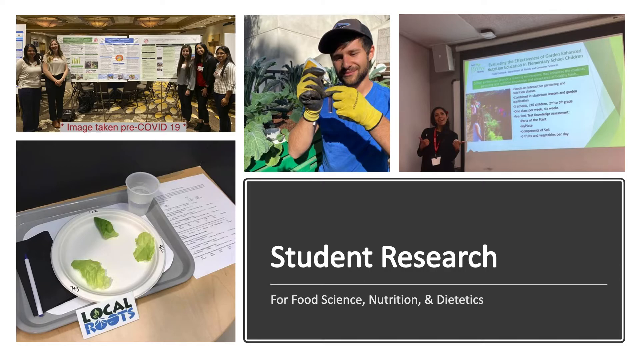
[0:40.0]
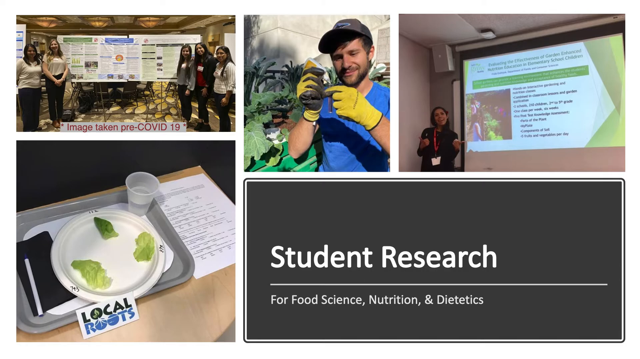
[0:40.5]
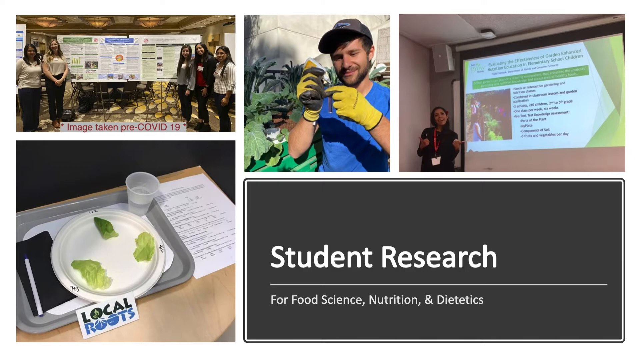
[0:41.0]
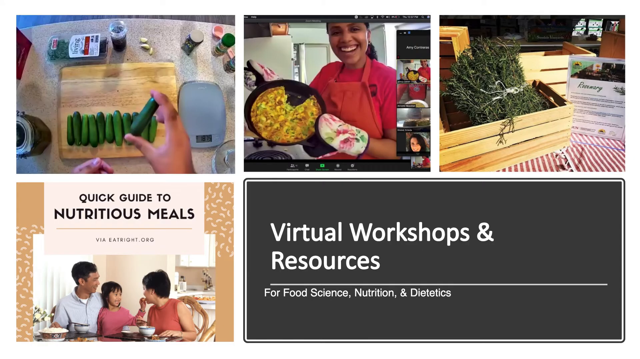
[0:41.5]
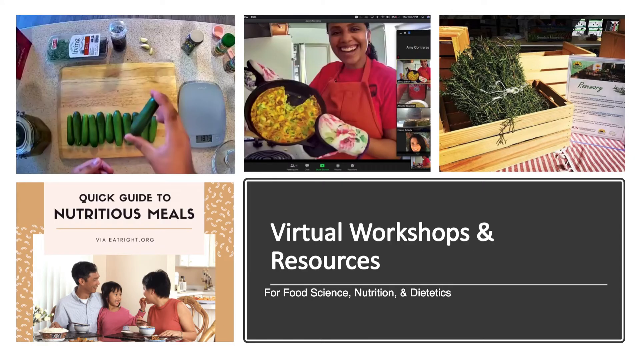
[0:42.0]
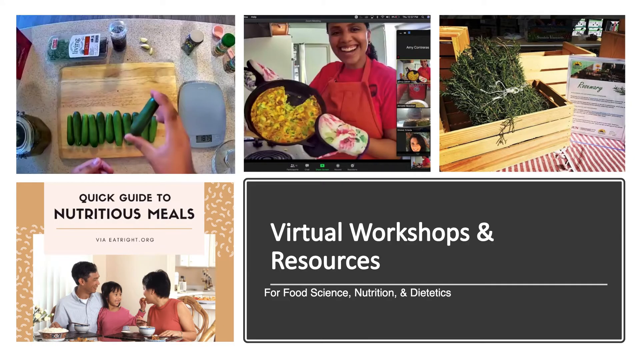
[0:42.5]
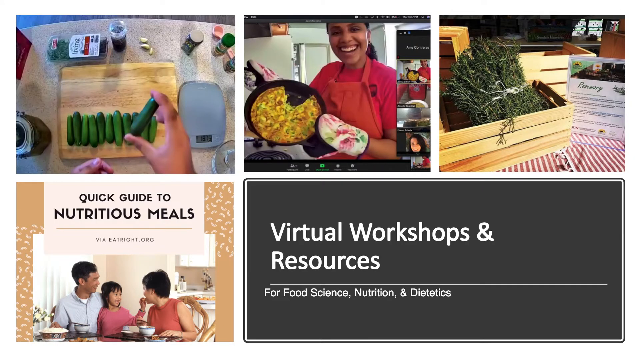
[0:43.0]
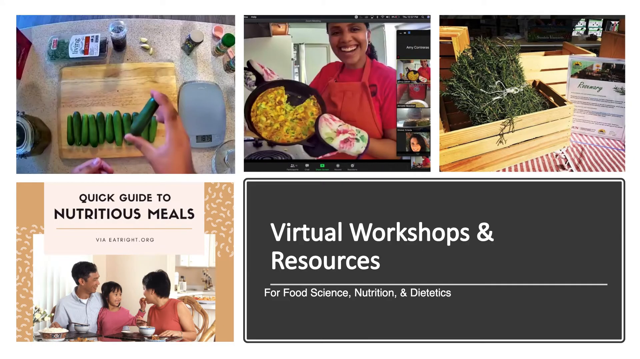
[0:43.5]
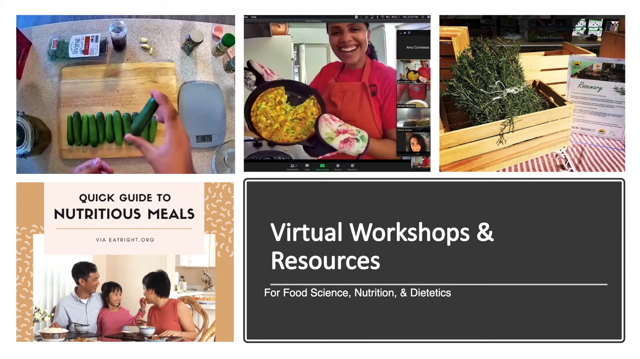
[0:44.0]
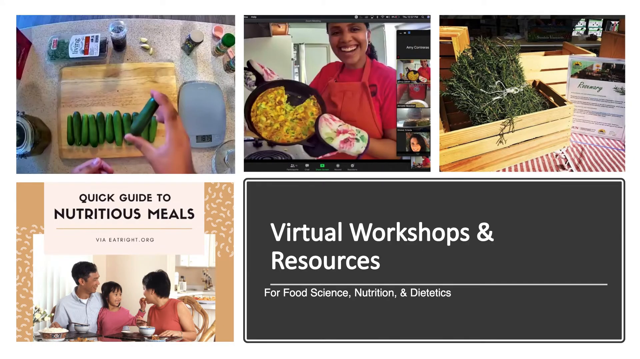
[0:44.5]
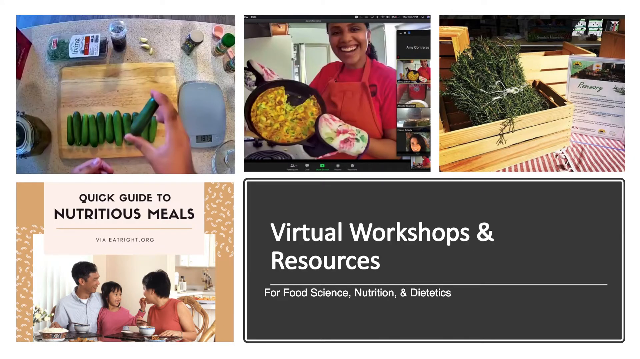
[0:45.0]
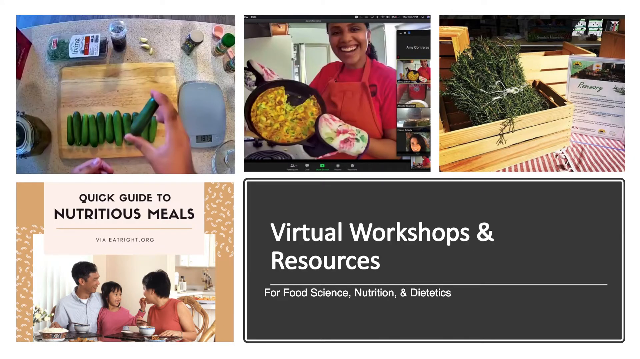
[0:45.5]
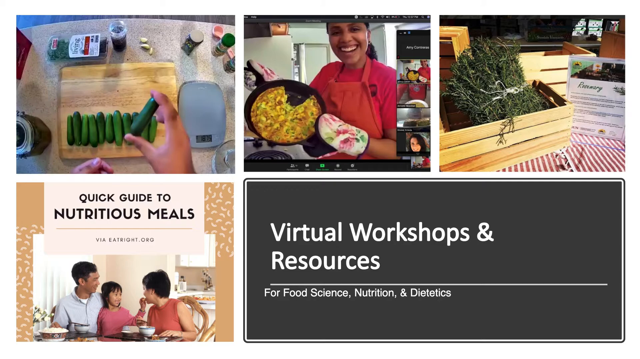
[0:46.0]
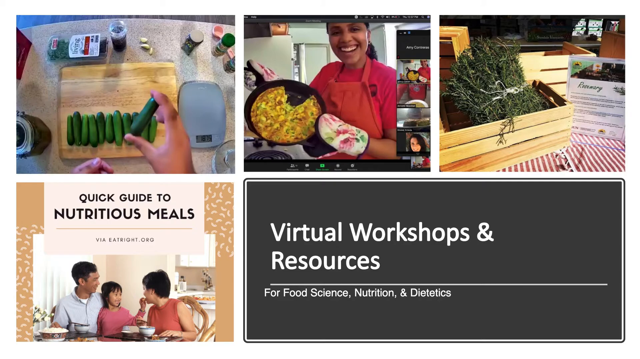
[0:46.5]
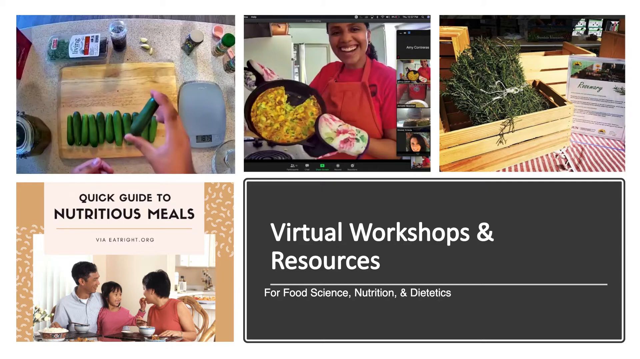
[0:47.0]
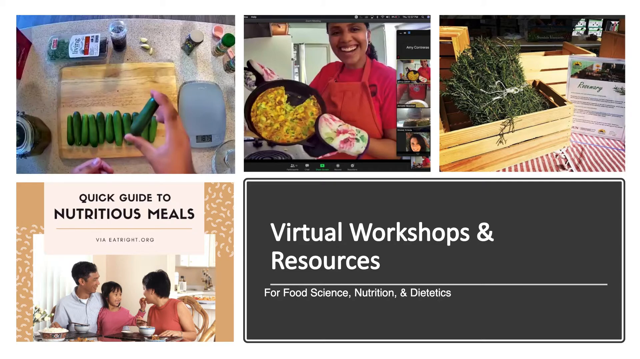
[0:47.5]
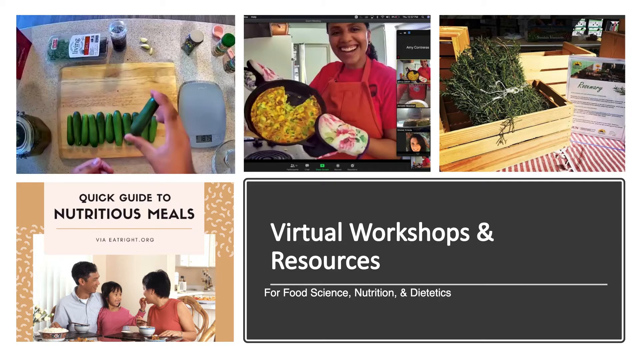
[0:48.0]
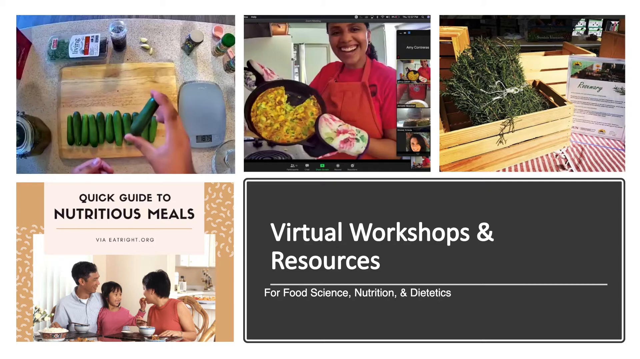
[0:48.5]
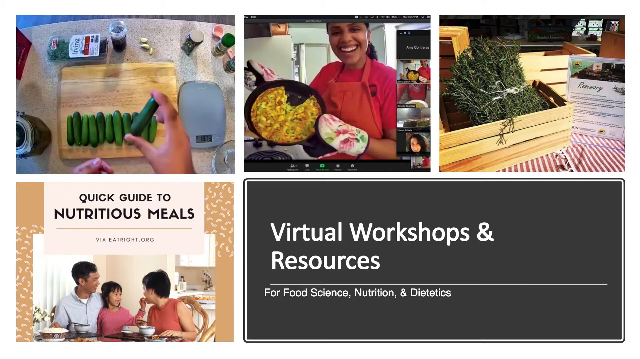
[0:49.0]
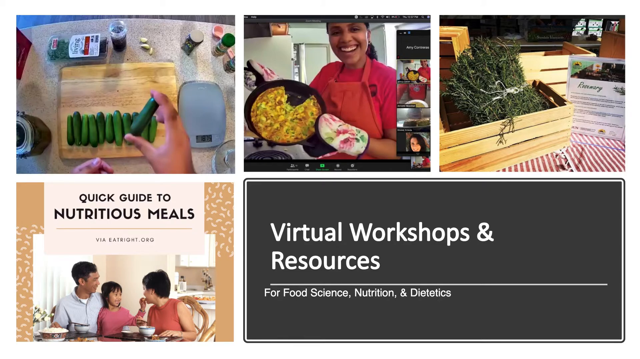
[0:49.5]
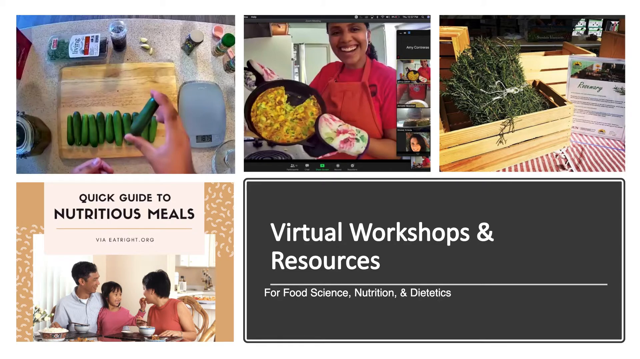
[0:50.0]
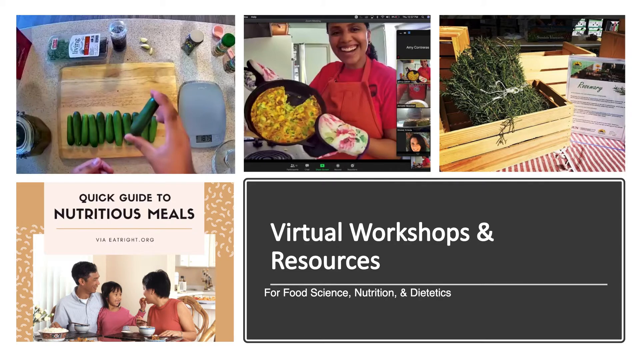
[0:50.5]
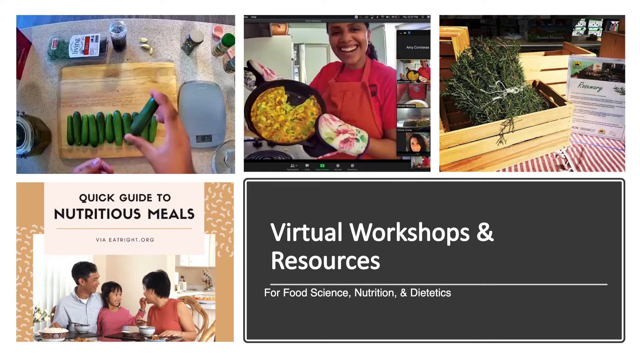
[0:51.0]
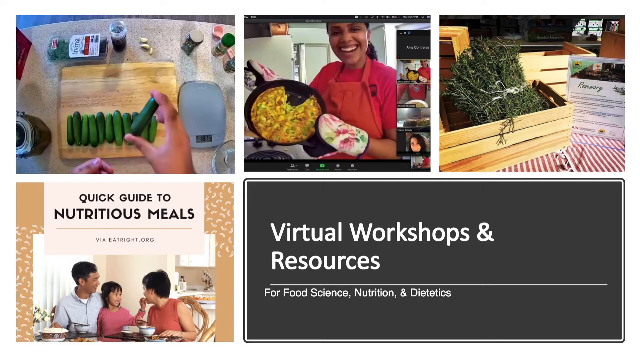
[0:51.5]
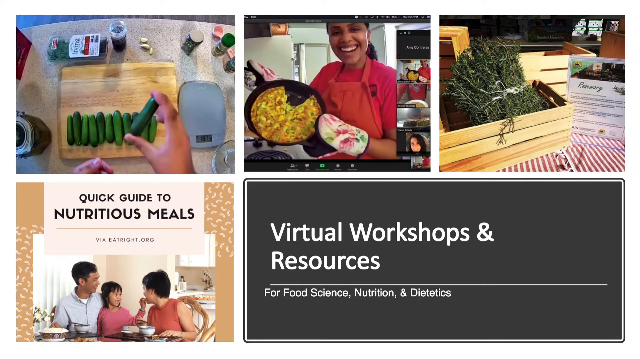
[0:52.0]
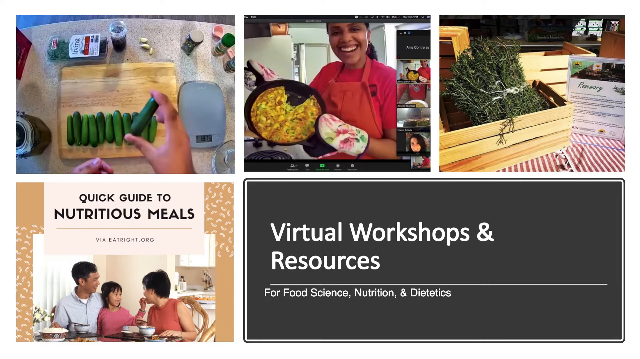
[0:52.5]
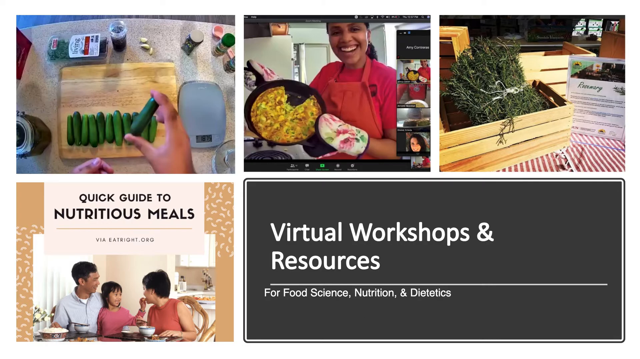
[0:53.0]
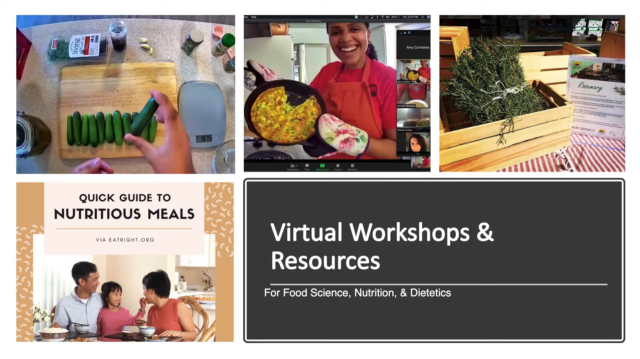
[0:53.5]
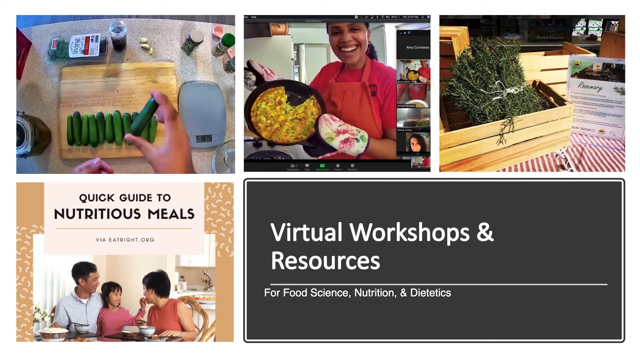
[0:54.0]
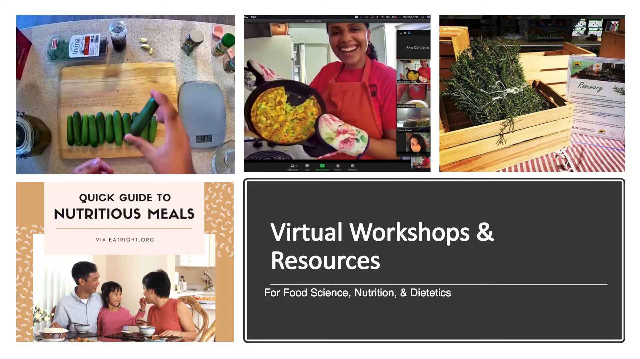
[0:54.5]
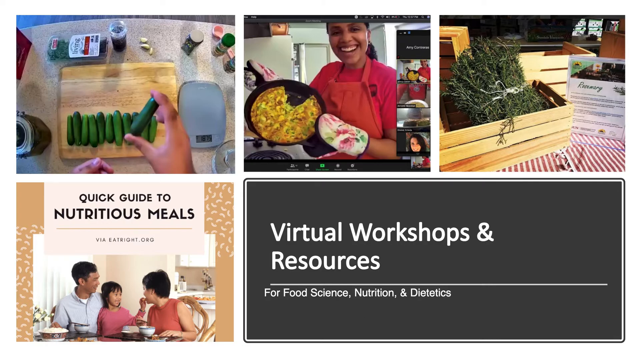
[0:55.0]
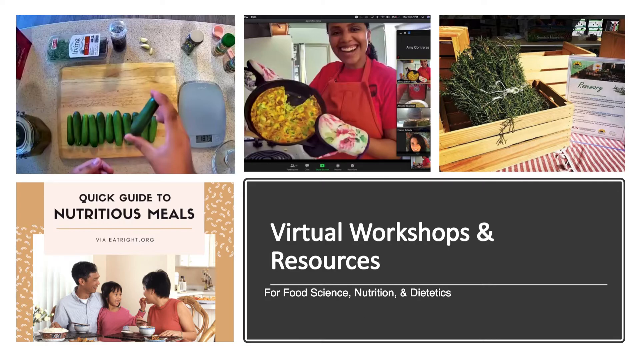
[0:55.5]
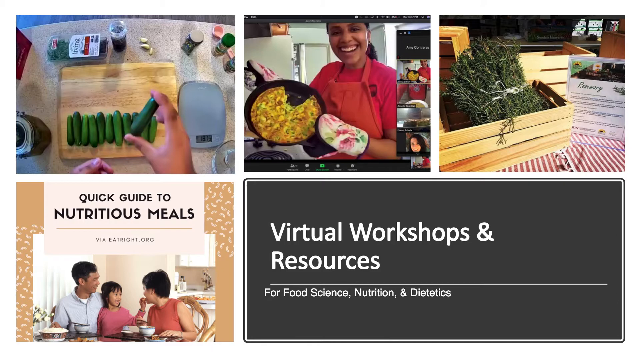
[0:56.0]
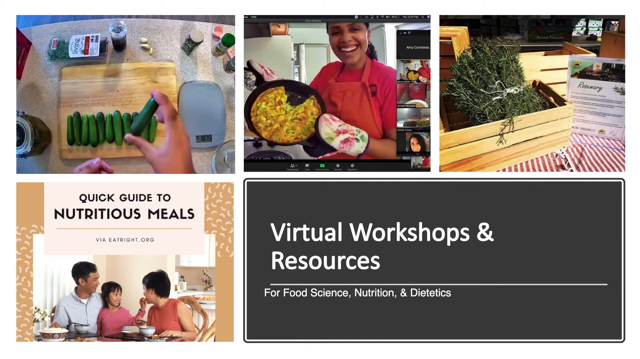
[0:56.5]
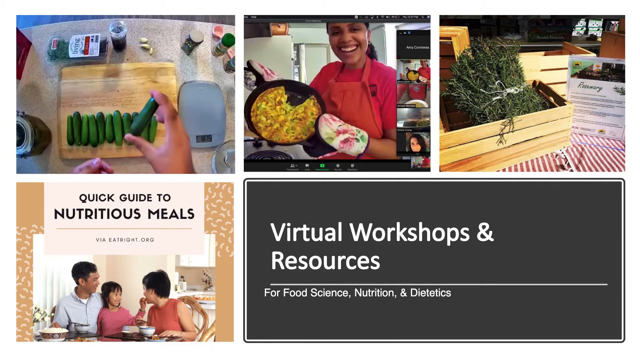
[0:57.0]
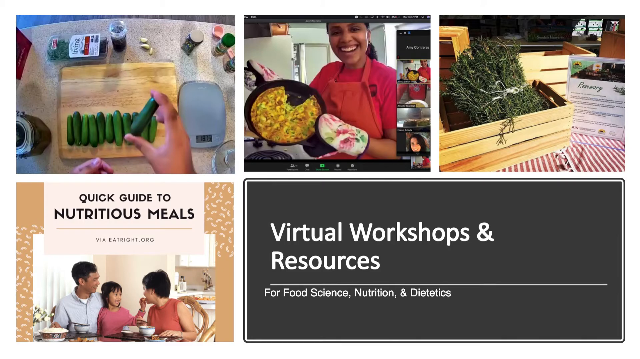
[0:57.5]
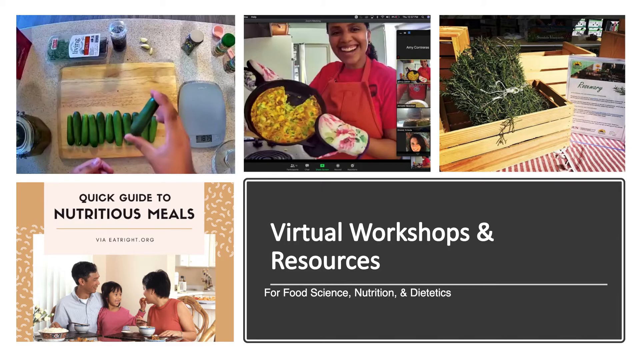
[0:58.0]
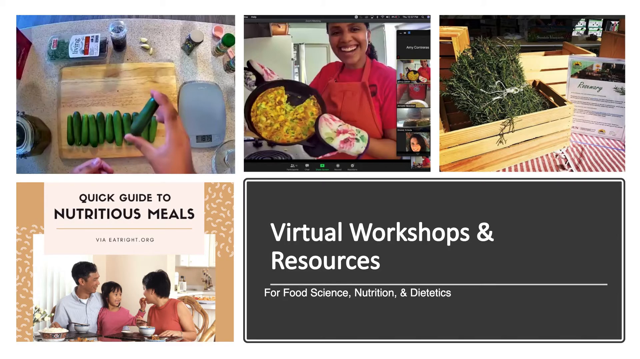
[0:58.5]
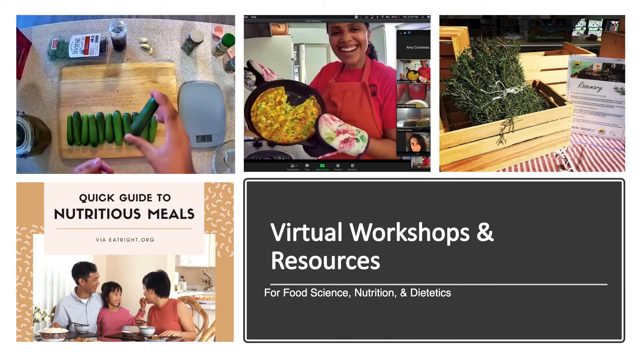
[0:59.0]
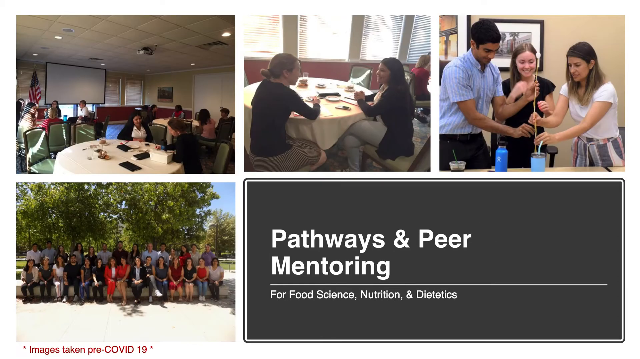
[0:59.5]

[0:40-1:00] The student research screen, with "student research" in the bottom right, shows a plate with three lettuce leaves on a tray that says "local roots," a man gardening, a woman giving a PowerPoint presentation, and five women standing in front of a couple of boards with poster information, marked "image taken pre-COVID-19." Next, a screen reads "Virtual workshops and resources." At the top, someone holds up what seems to be a small cucumber or zucchini, with a bunch of other small cucumbers or zucchinis on a cutting board next to a food scale. In the middle, a woman in red wearing a red apron holds up a cast iron pan with what looks like possibly some sort of quiche in it. On the right is a wooden crate filled with rosemary. At the bottom is what looks like some sort of guide reading "quick guide to nutritious meals," with what looks like a photo of a family on the front.